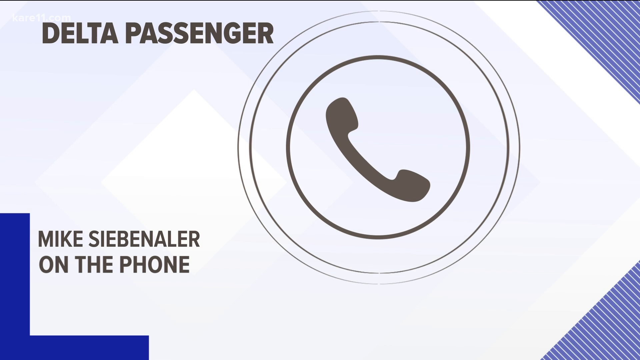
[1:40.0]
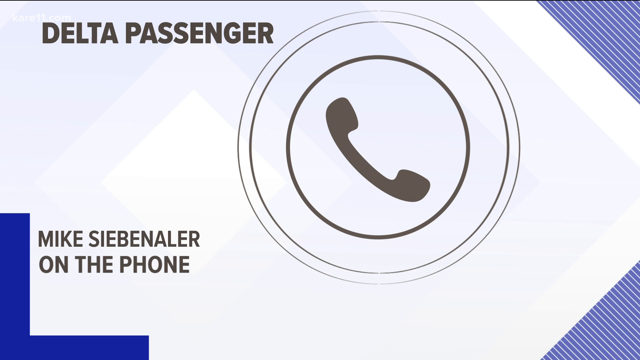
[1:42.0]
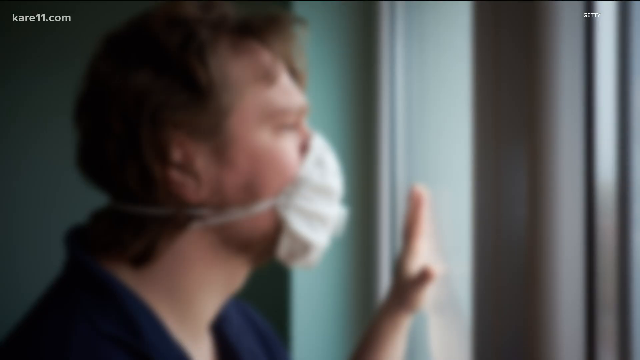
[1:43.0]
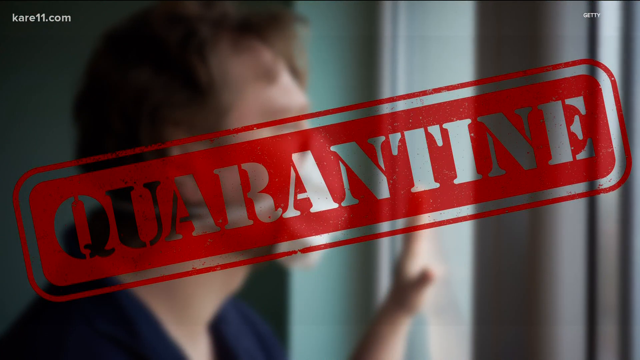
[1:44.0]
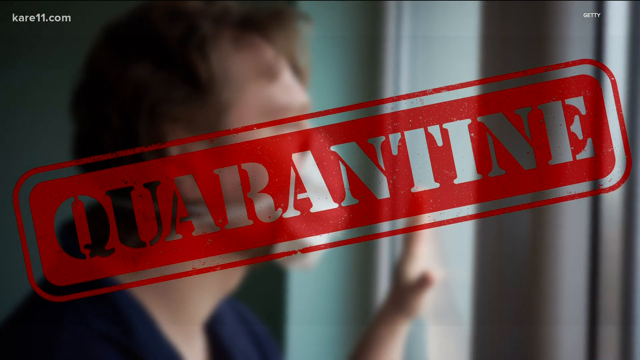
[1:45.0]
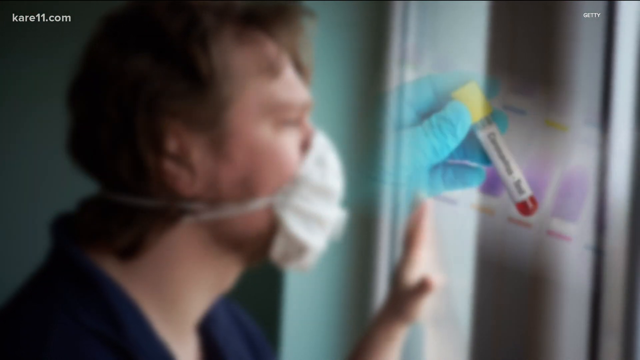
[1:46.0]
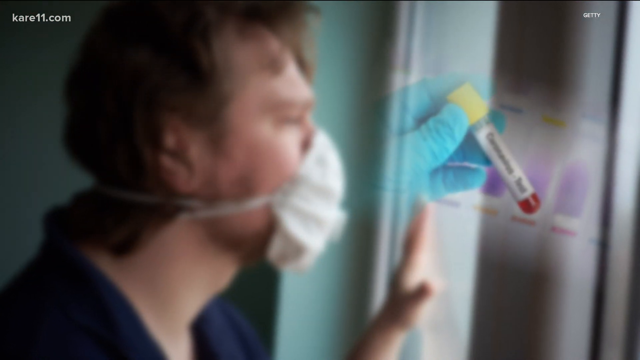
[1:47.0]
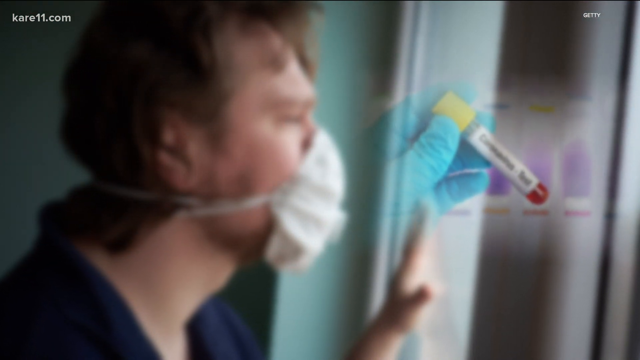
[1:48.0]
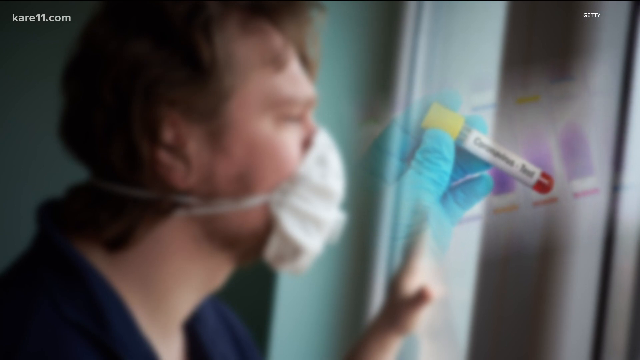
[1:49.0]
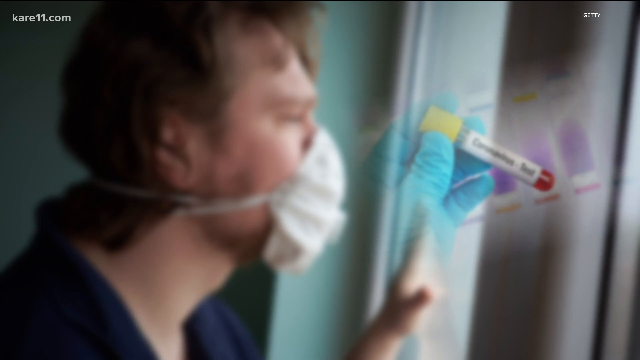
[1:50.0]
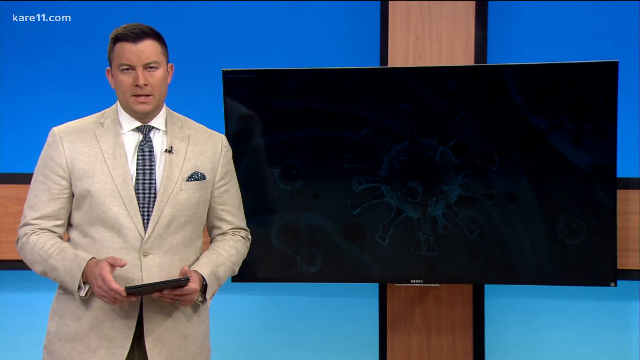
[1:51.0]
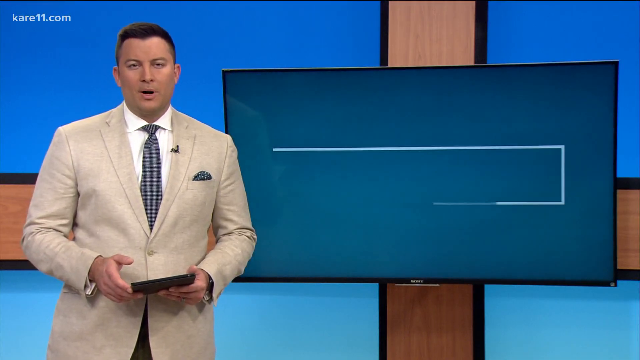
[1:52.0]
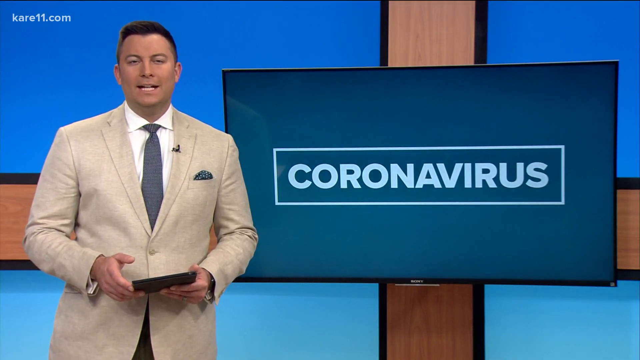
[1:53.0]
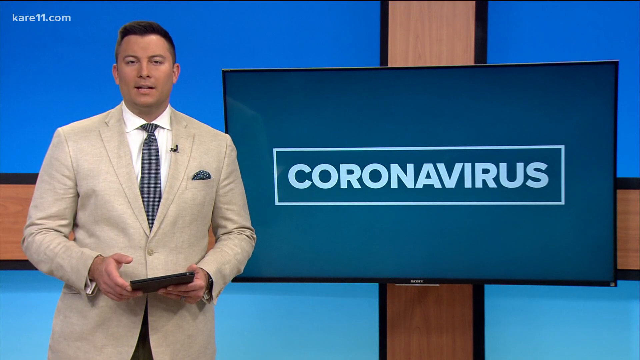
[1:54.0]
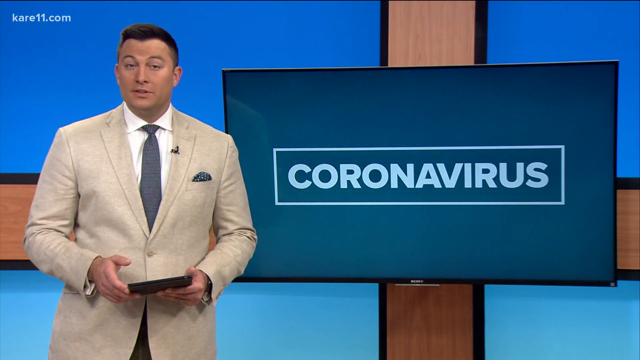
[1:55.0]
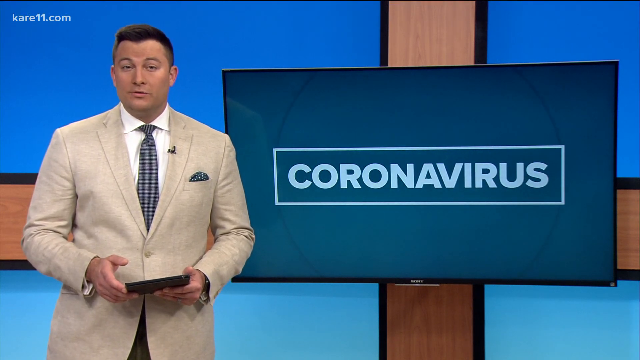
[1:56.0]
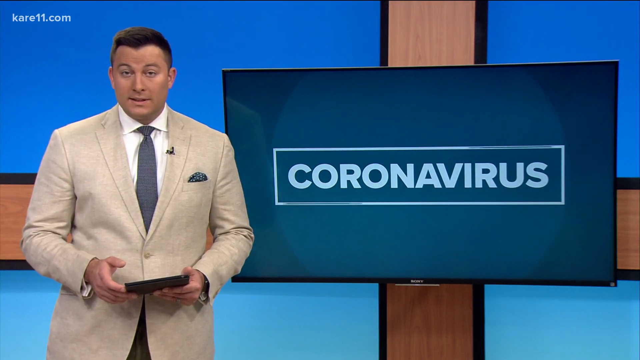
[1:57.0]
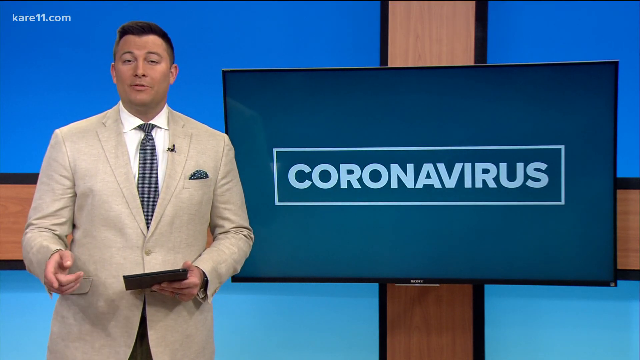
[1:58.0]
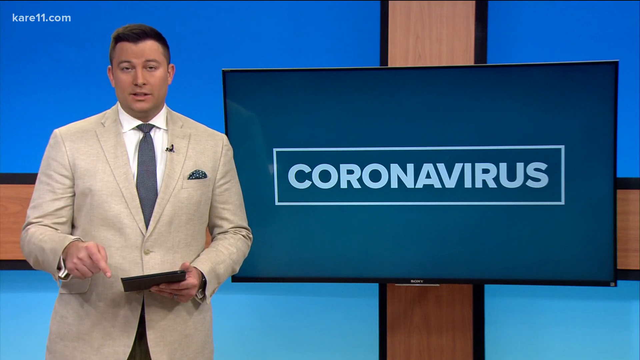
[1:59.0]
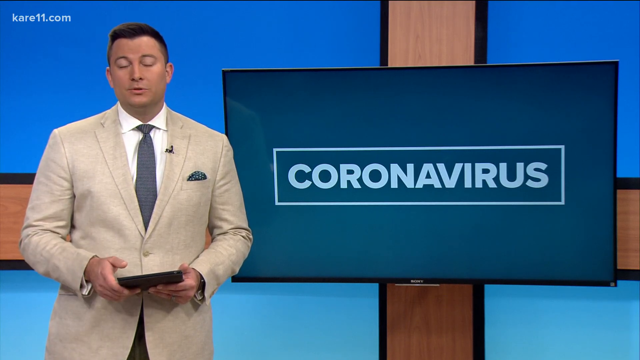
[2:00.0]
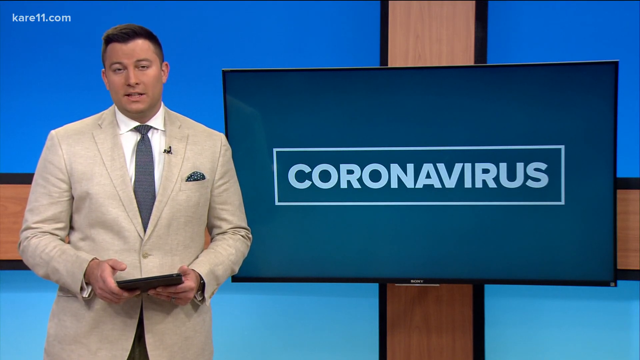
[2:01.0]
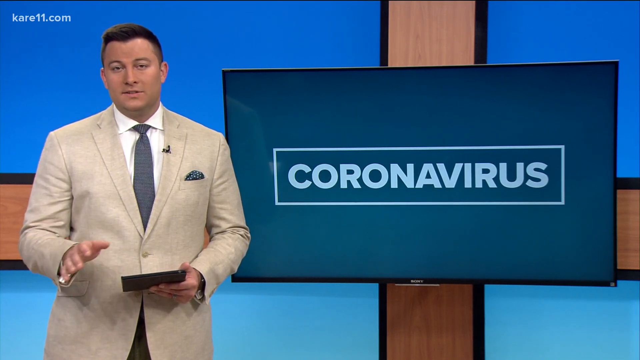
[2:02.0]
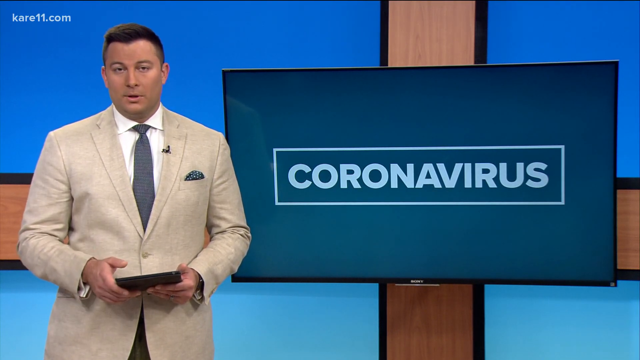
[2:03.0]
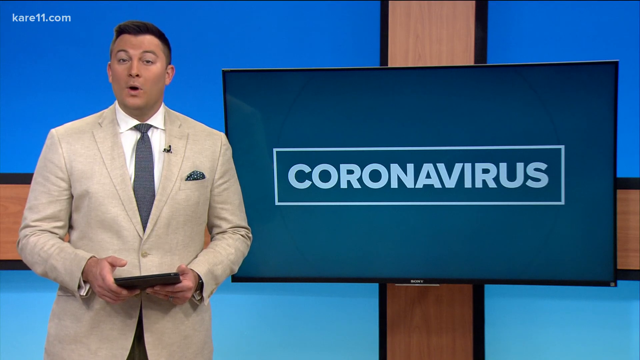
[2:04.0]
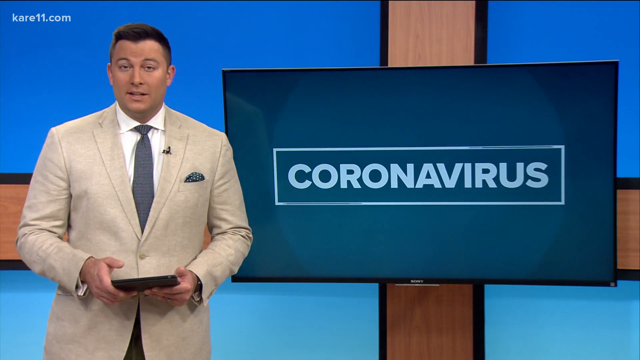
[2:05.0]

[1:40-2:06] A phone icon is in the center of the screen, with "Delta Passenger" in all uppercase in the top left corner and "Mike Siebenaler on the phone" in the bottom left corner, suggesting a phone call is taking place. The video transitions to a blurred photo of a person wearing a mask looking out a window, with a red "Quarantine" stamp appearing over it. A vial then appears on the left side, apparently being drawn. Next, "Coronavirus" is written in all uppercase on the screen as an anchor in a beige jacket is in front. It seems to be part of a news piece.